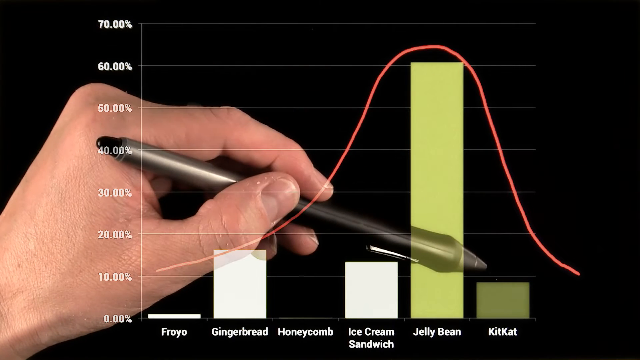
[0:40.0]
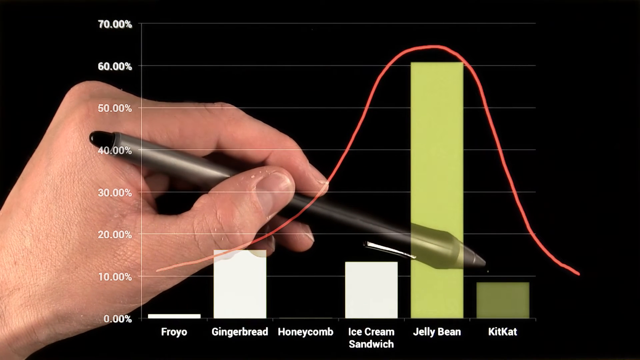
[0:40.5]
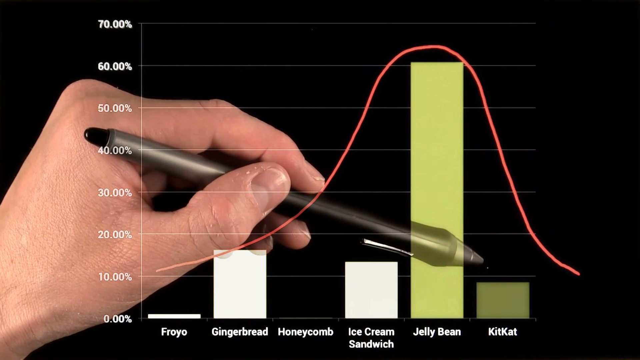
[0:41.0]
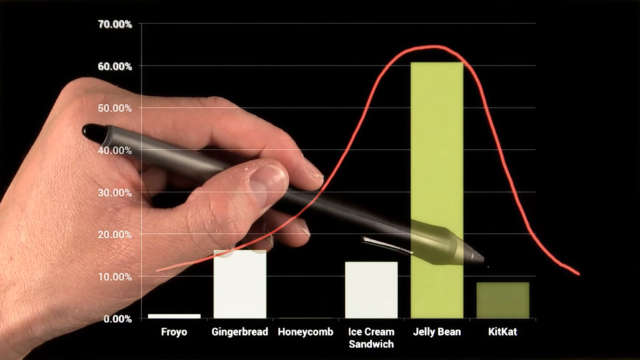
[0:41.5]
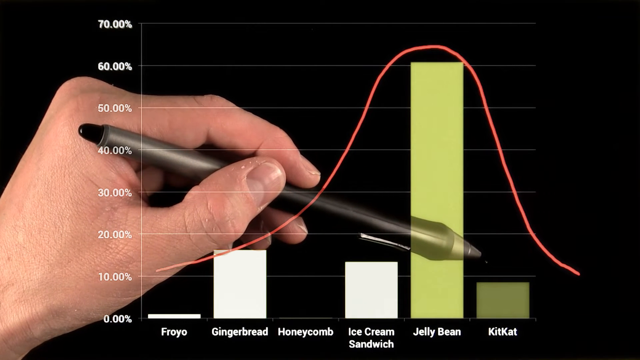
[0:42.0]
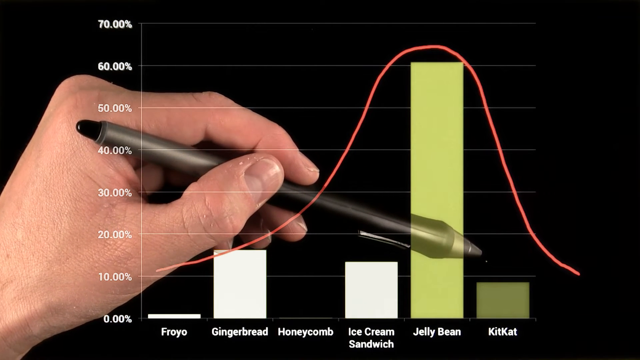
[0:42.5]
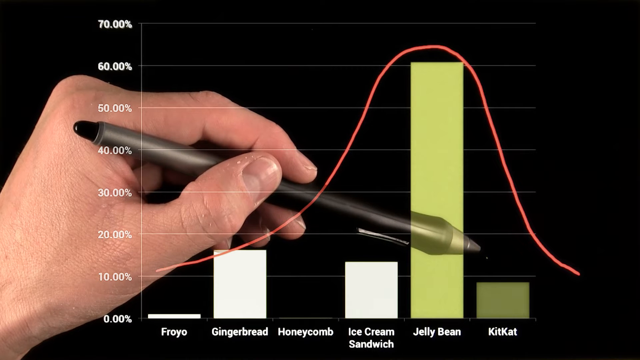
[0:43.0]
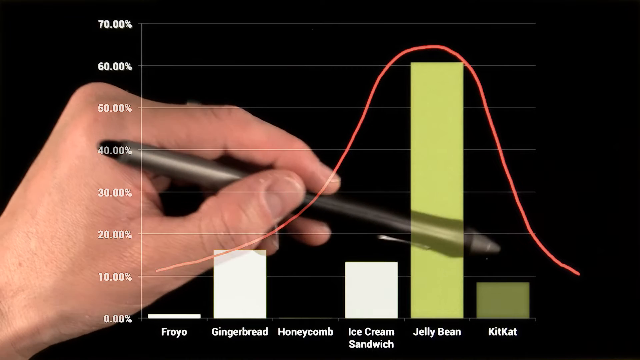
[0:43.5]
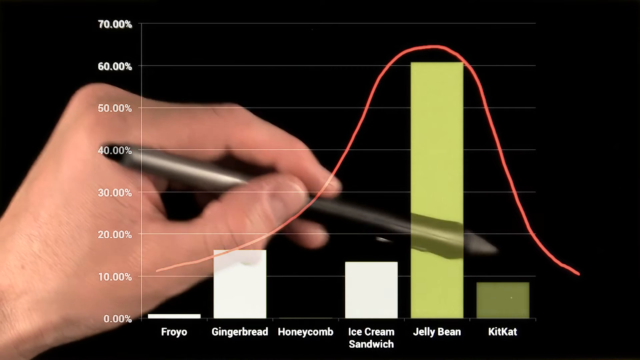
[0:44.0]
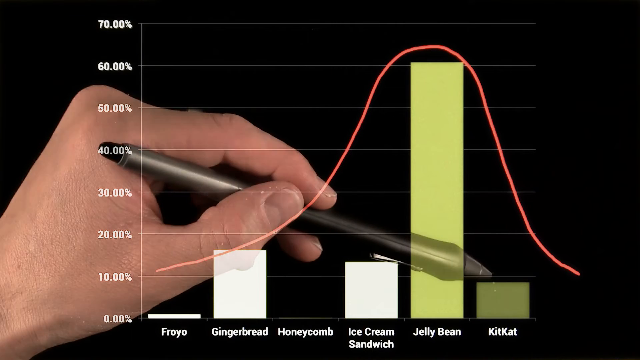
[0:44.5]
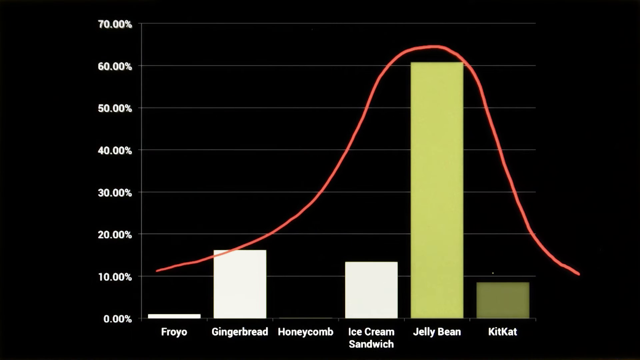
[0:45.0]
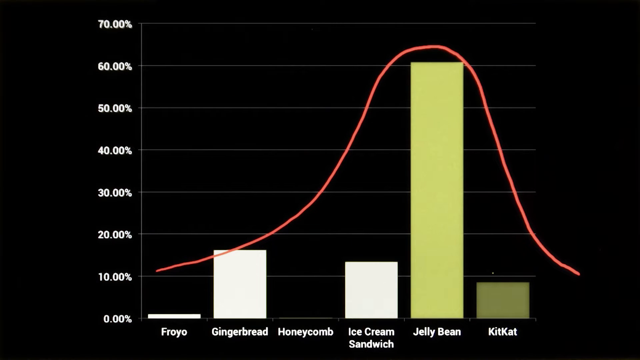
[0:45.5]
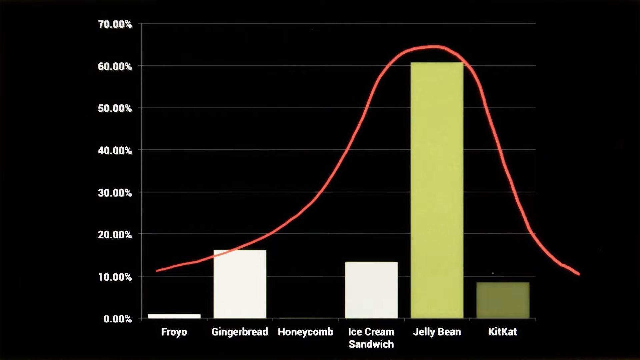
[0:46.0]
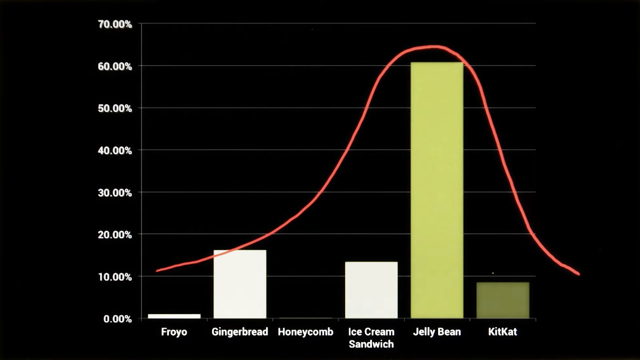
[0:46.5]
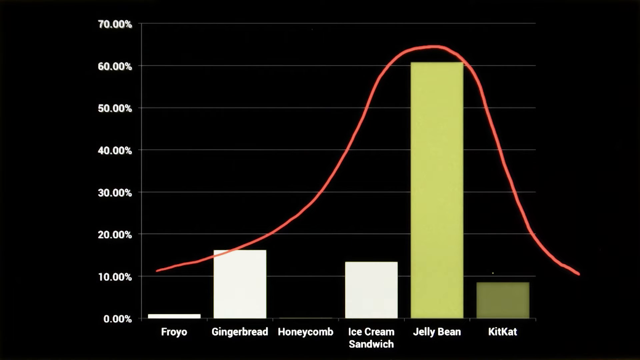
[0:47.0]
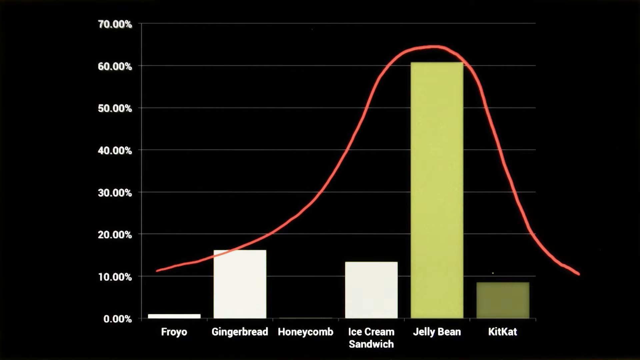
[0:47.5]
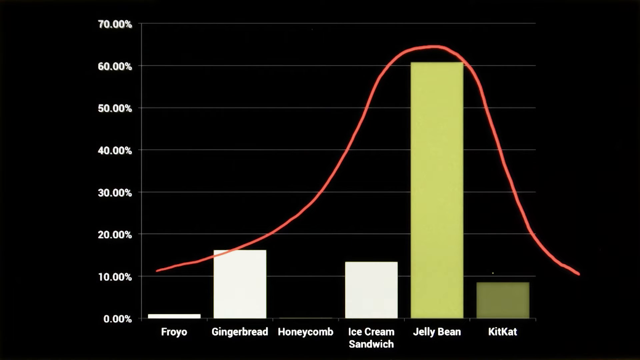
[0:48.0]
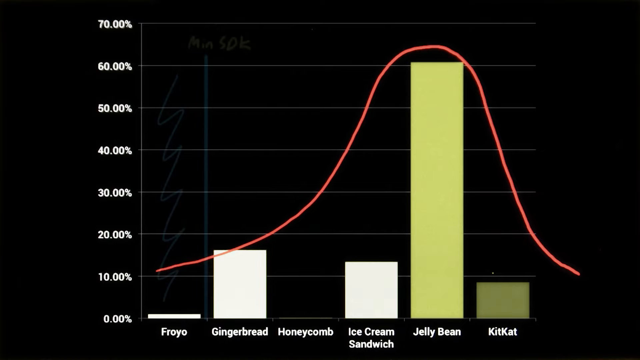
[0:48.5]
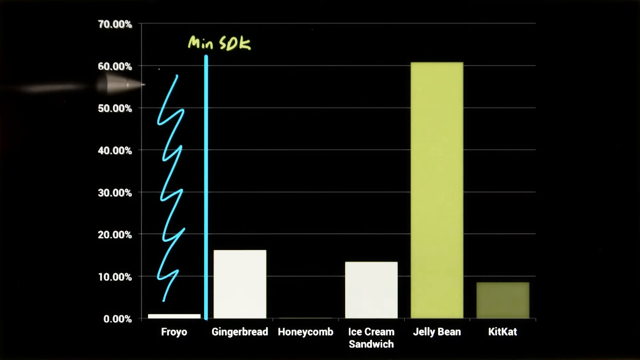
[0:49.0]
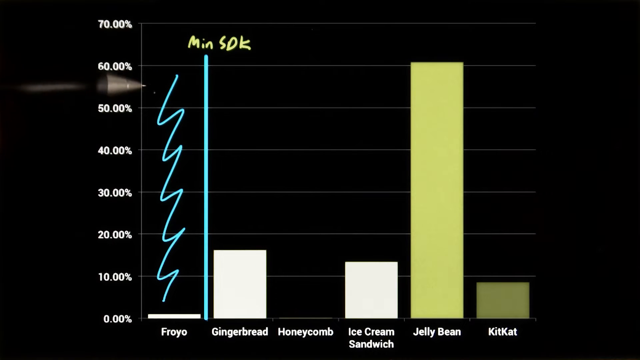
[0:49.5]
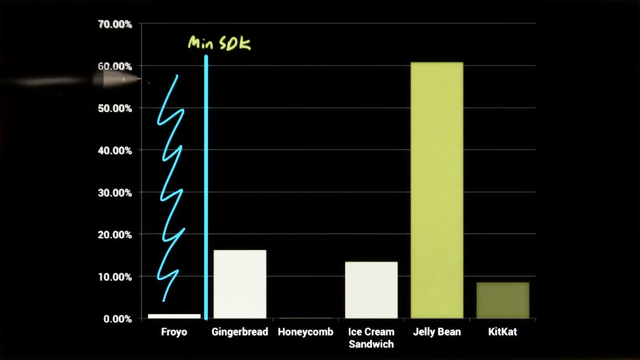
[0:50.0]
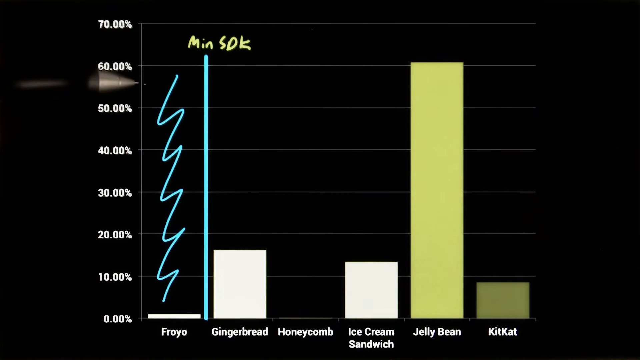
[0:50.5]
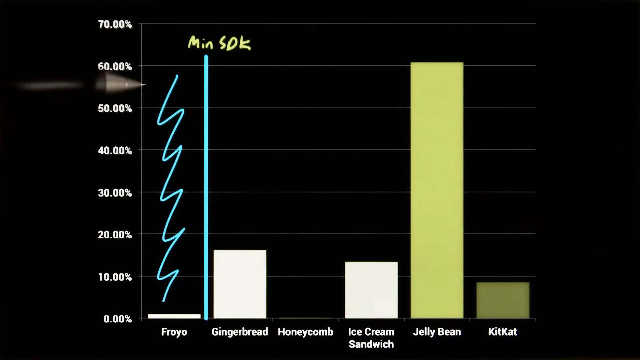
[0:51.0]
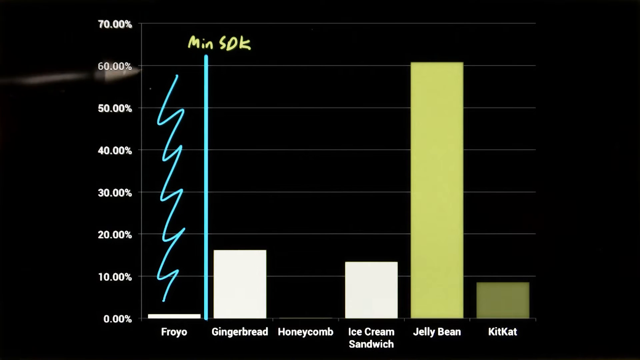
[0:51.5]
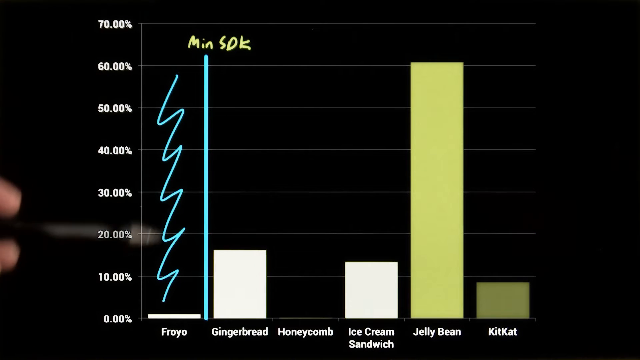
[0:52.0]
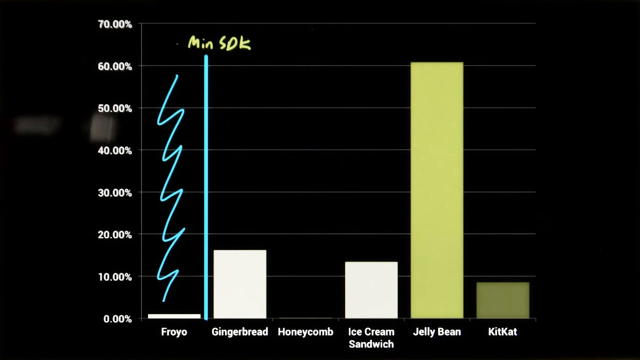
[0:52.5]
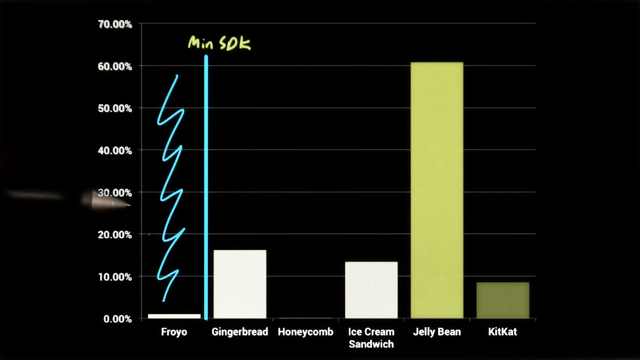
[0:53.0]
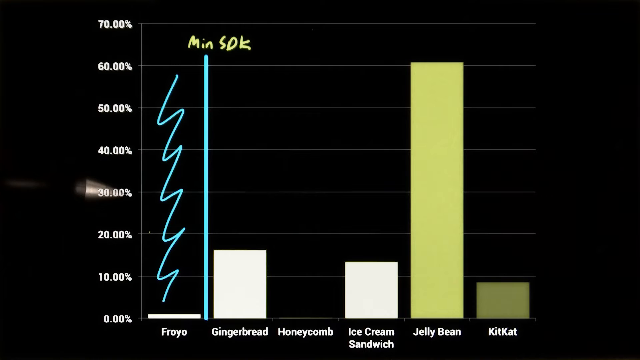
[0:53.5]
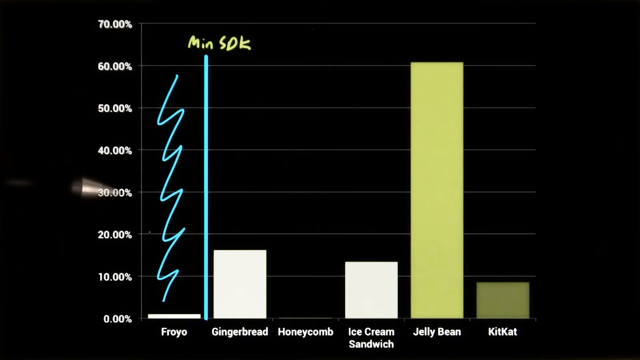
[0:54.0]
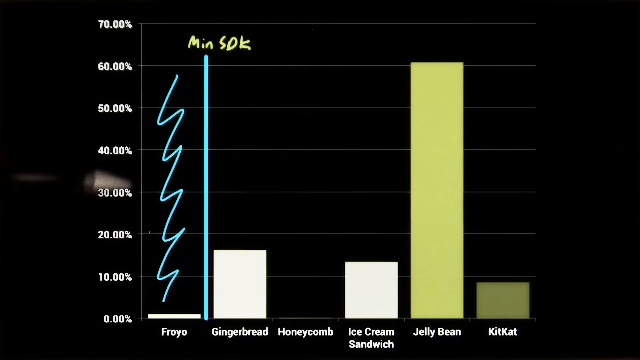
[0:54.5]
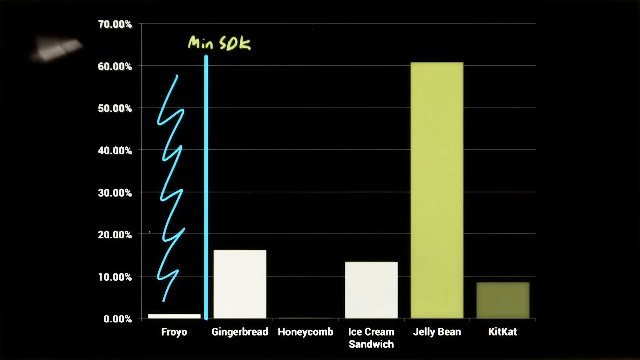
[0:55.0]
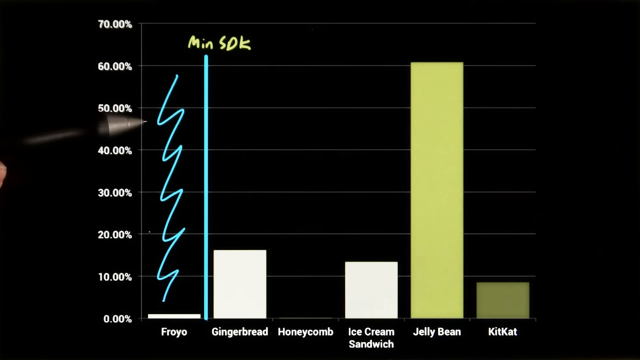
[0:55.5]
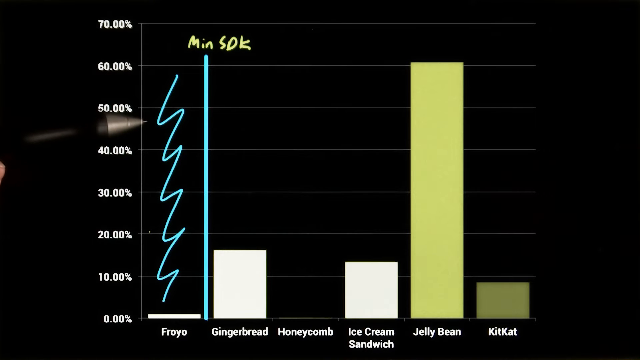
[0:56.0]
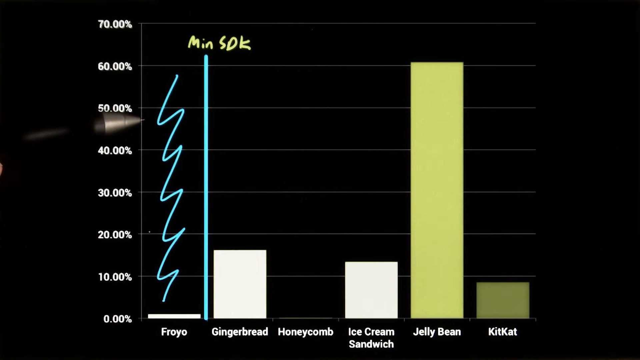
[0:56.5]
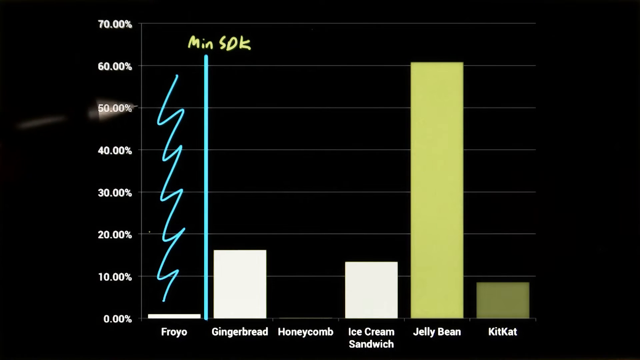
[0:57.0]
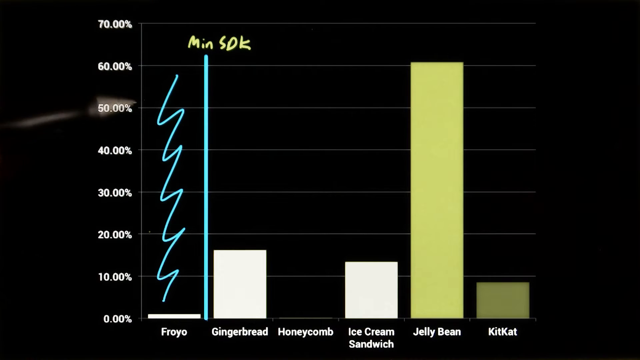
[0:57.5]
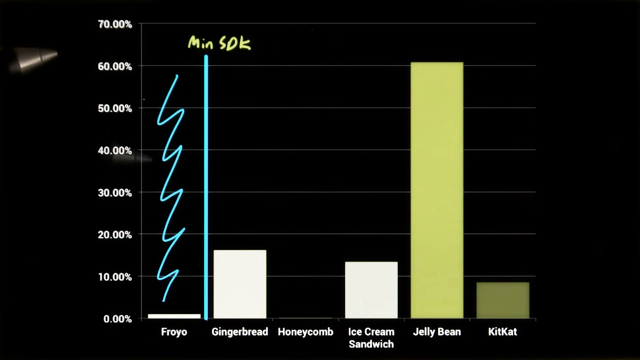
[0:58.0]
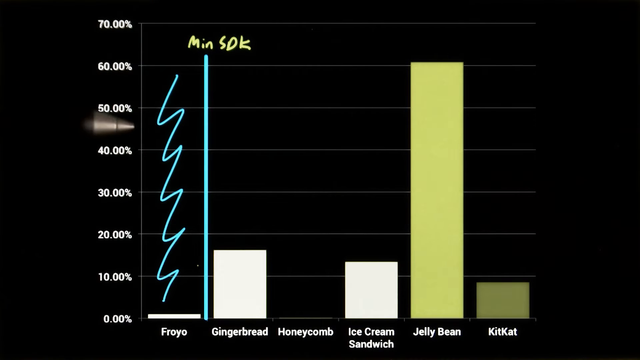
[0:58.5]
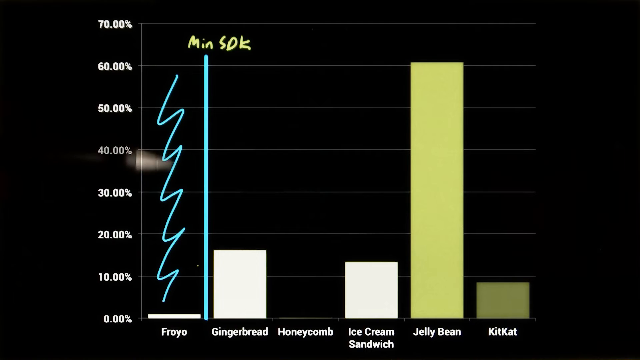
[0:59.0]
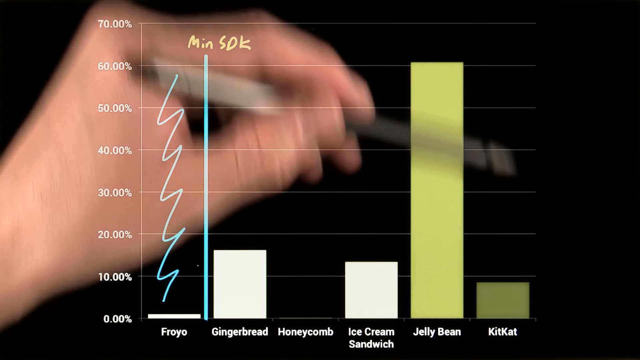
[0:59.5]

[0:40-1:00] Along the bottom of the bar graph are entries for "froyo", "gingerbread", "honeycomb", "ice cream", "jellybean" and "KitKat". The left hand holds the pen with thumb and forefinger, the pen also resting on top of the middle finger for balance, and the end of the pen rests in the fleshy area between the thumb and finger. The pen points all the way across to KitKat. A pink line is drawn from around the 10% area on the vertical axis, curving gradually up the screen to around the height of the jellybean bar and then down again to a 10% level around KitKat. The individual waves the pen around the KitKat area. Between Froyo and Gingerbread, a pale blue line runs up to just over the 60% line, and above it, in a sort of yellowy green, is the text "MinSDK". Above Froyo, reaching up to around the 60% line on the vertical axis, is a light blue squiggly line that runs up and down repeatedly until it reaches the top, where he is now pointing with his pen. He then moves the pen down to 30% before indicating something with a counterclockwise rotation of the pen around the whole chart.